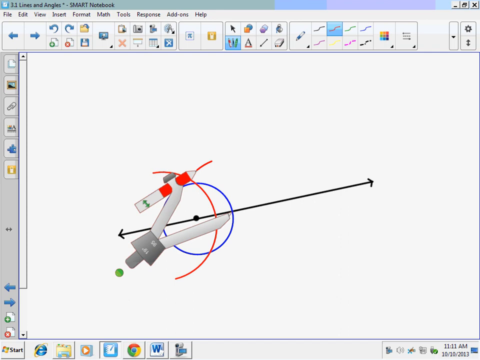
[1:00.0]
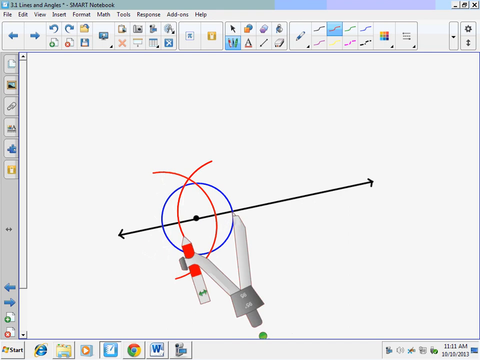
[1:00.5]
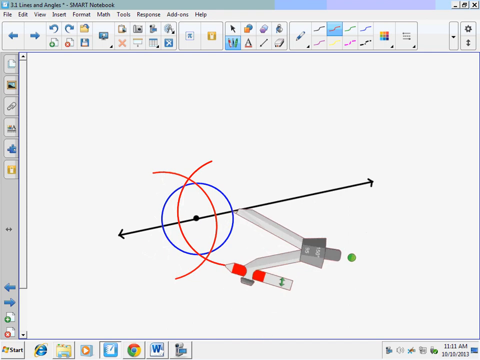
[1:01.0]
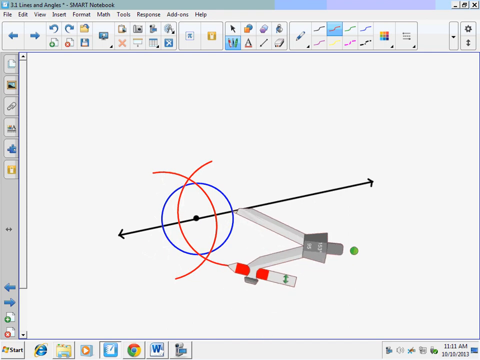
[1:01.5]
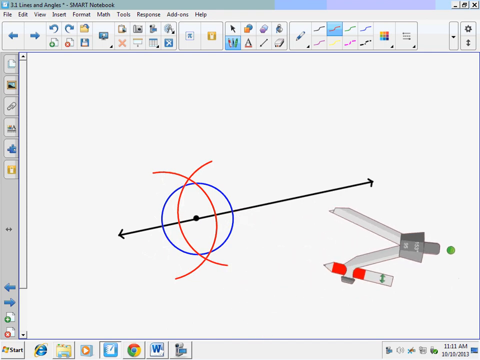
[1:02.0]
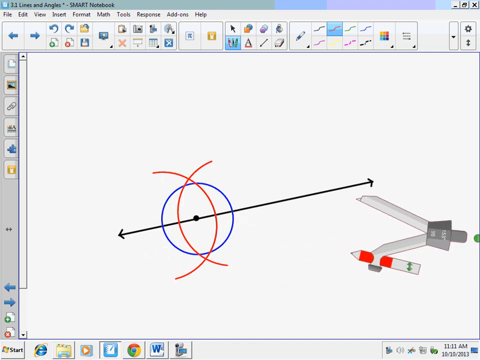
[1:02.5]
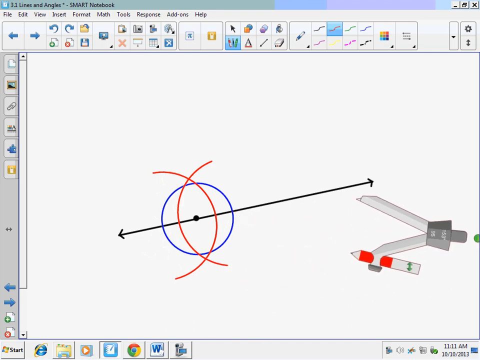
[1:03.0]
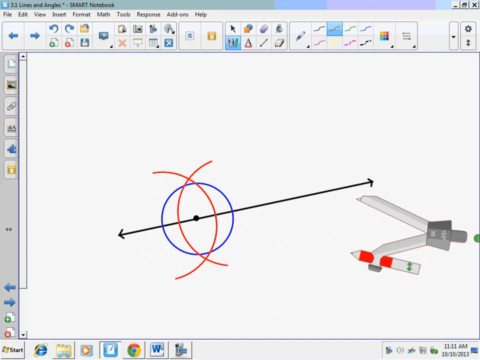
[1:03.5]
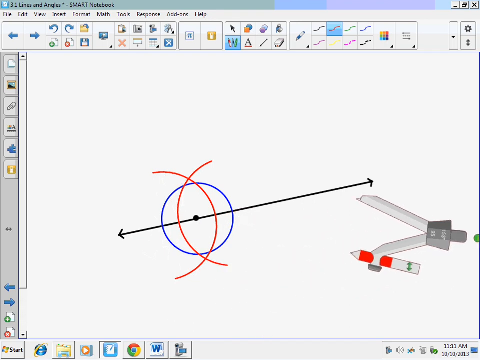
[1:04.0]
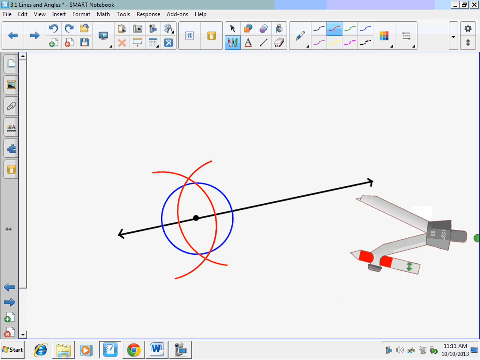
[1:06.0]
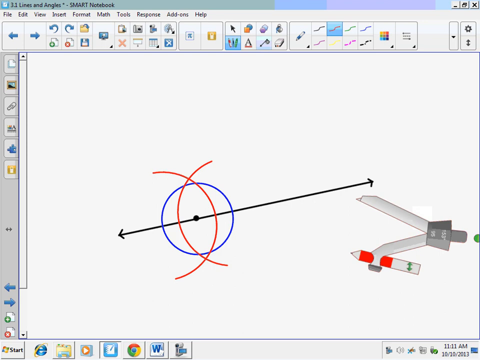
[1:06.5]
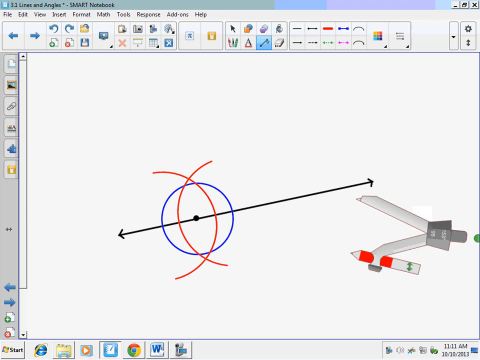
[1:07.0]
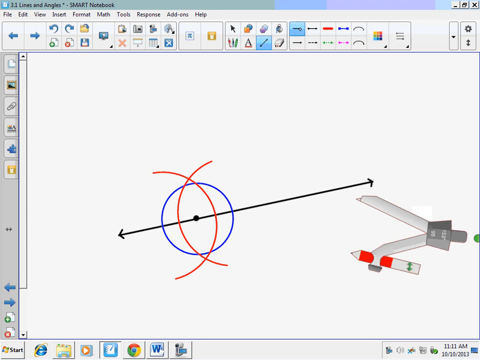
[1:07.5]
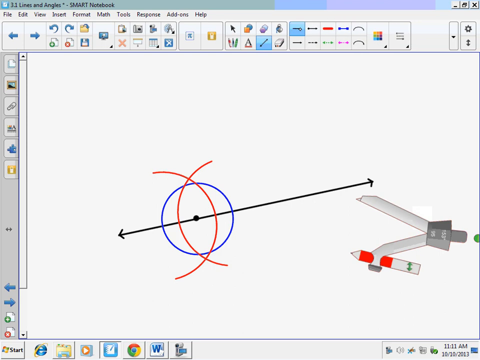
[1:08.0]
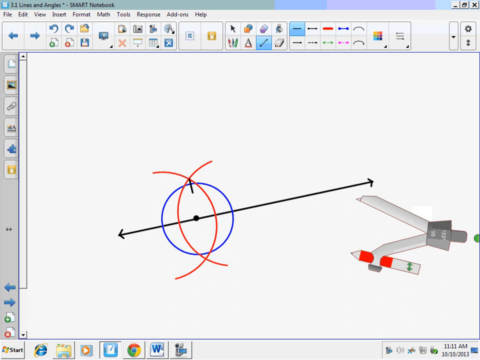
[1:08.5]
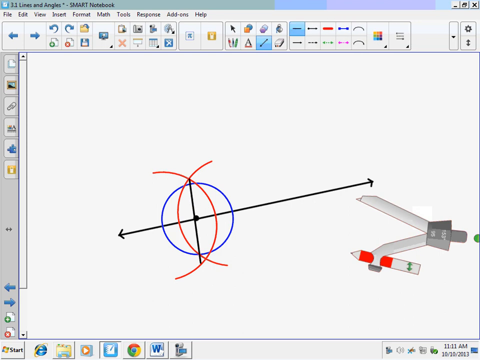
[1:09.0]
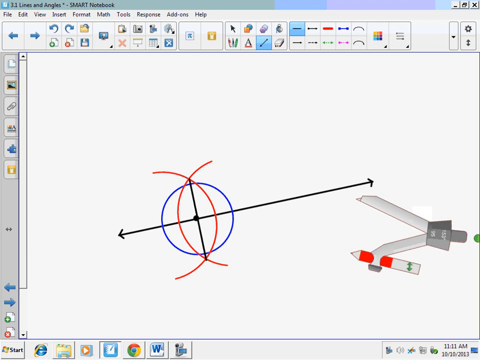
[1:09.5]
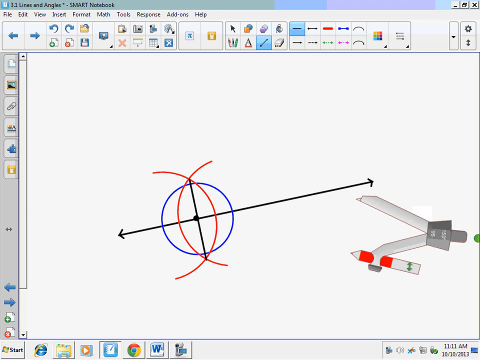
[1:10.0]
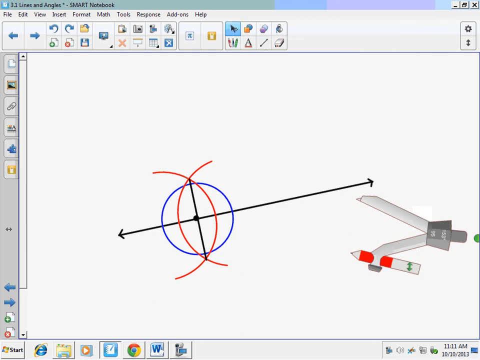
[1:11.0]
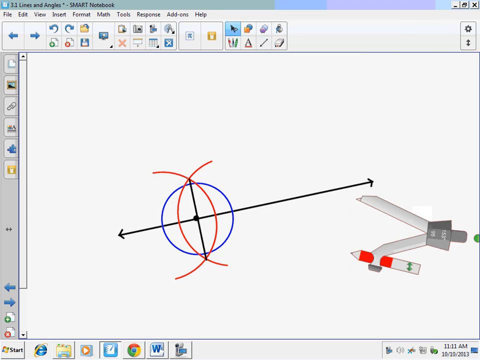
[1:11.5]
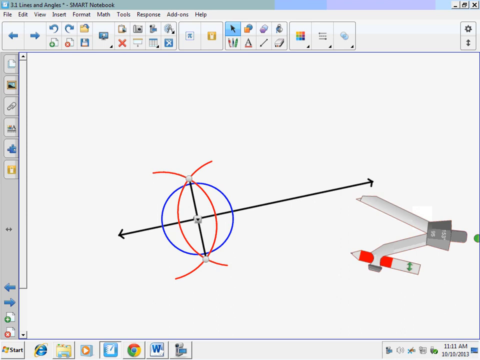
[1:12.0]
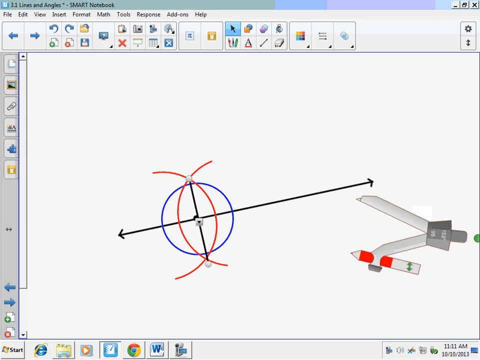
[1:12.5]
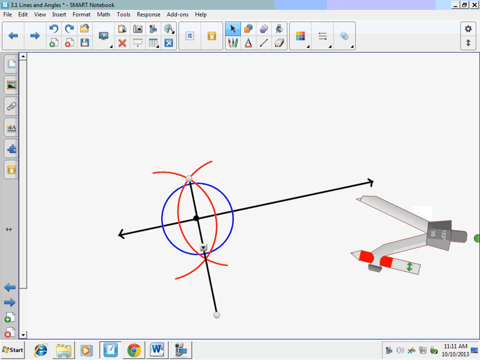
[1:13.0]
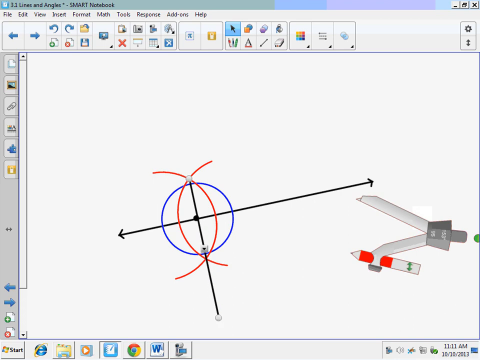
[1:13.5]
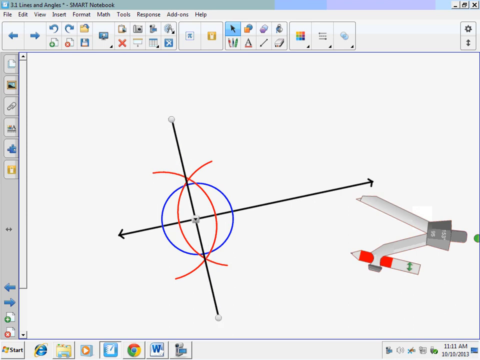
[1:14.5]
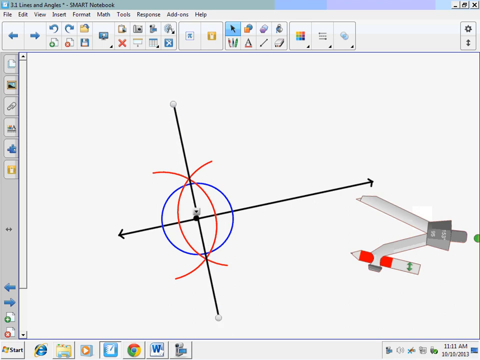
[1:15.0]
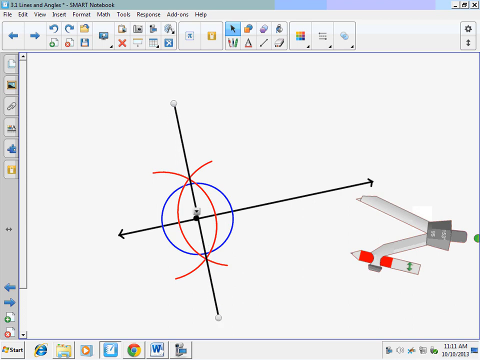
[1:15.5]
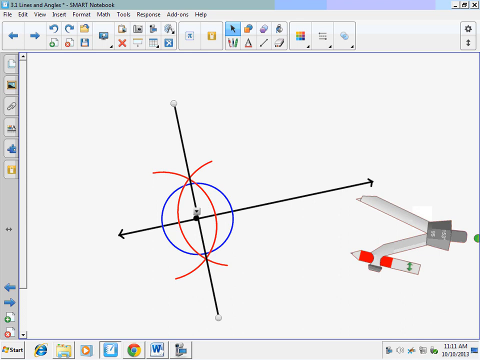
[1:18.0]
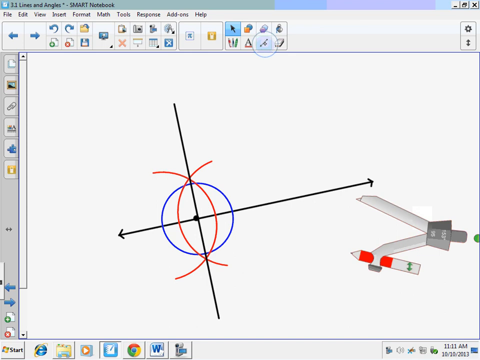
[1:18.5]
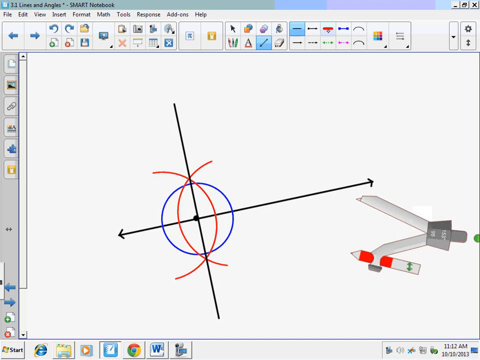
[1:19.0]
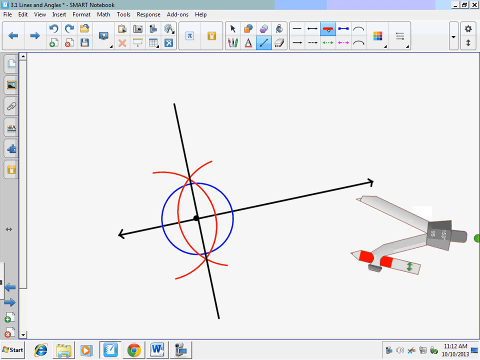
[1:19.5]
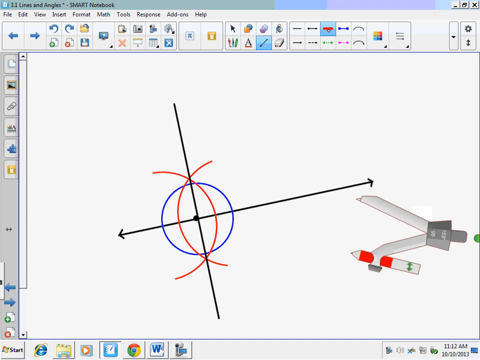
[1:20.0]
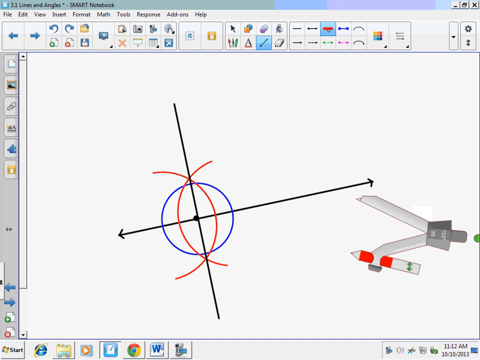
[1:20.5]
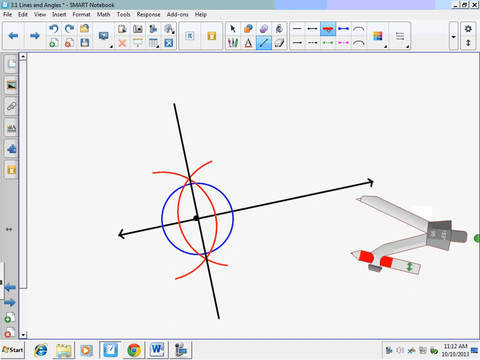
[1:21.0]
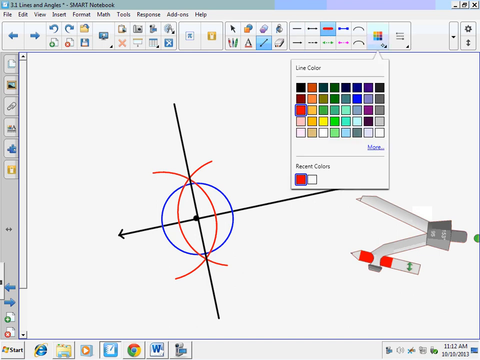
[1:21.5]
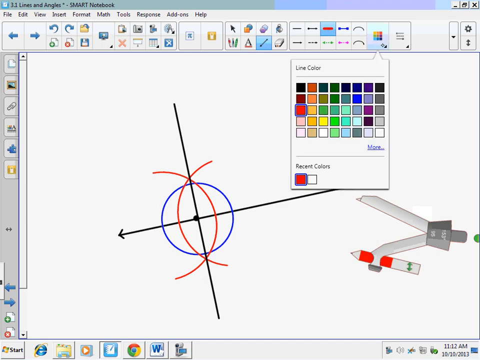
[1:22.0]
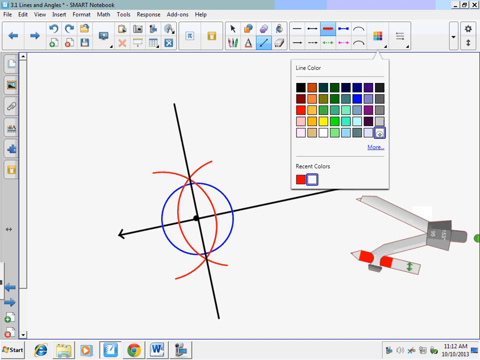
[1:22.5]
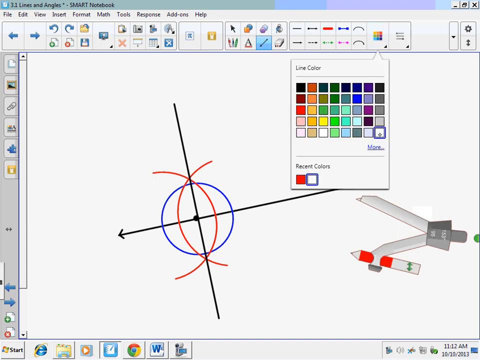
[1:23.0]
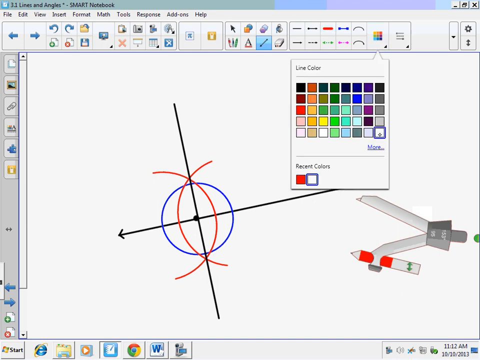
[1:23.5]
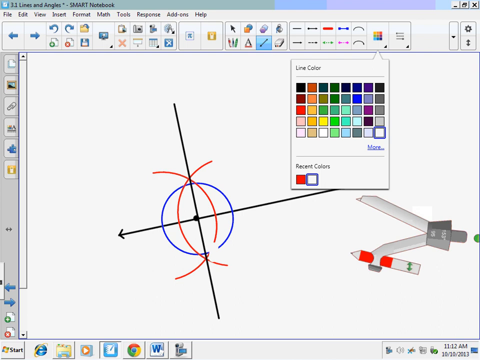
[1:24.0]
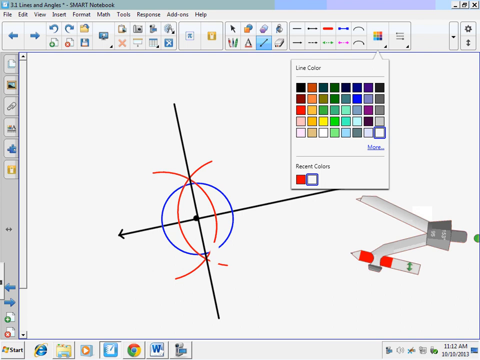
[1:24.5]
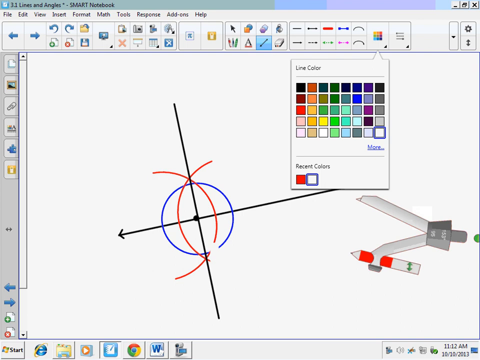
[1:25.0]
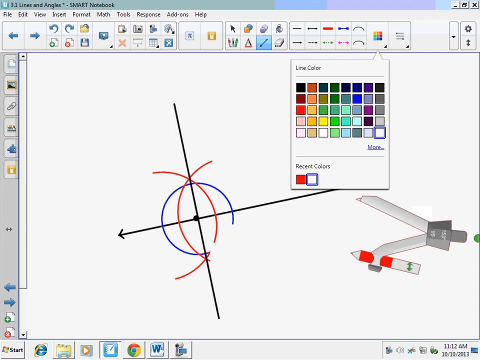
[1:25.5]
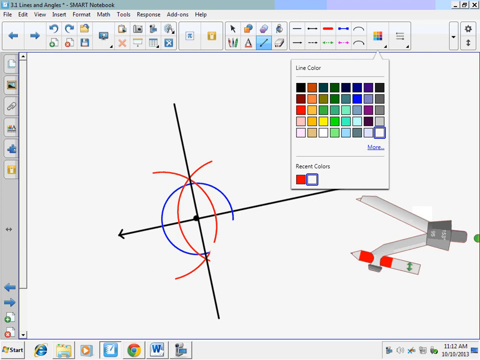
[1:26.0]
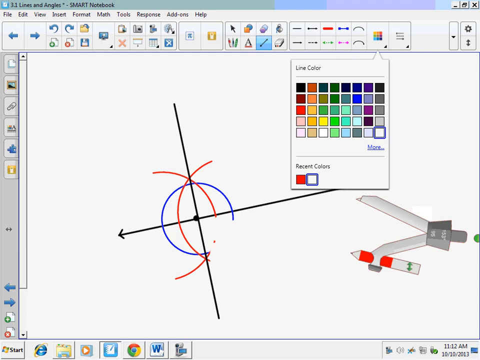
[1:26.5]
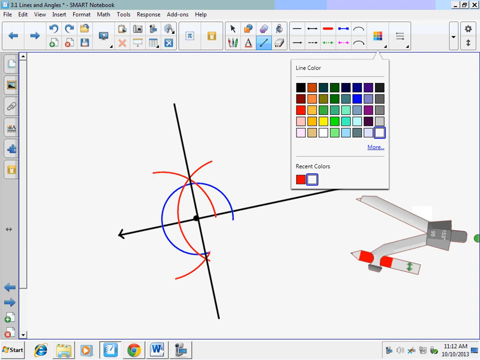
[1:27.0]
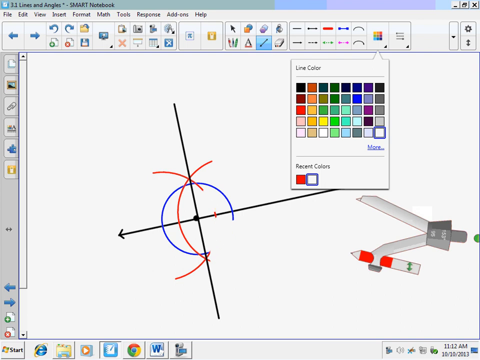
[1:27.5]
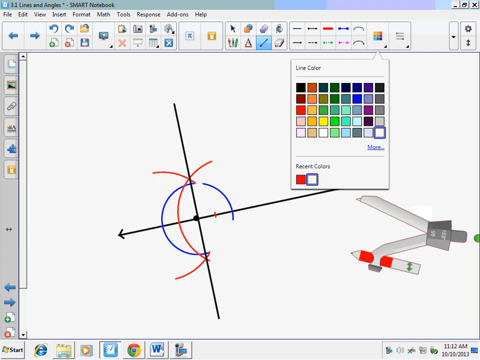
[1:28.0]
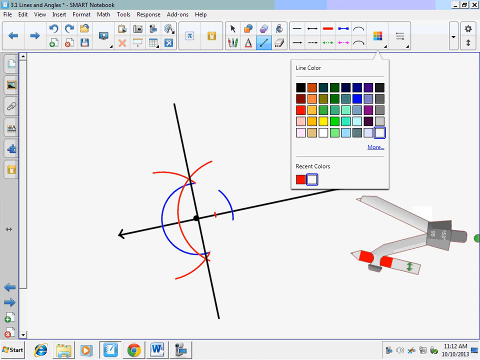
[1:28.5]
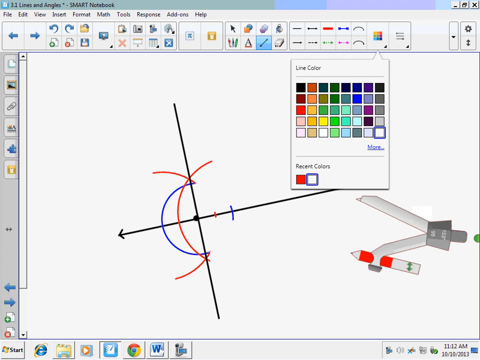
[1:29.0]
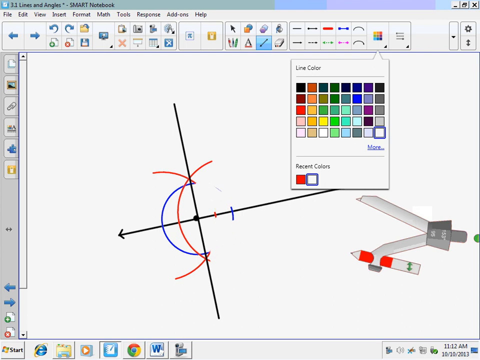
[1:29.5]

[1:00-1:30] A computer display is recorded showing a program titled "3.3 Lines at Angle Smart Notebook." On the solid white workspace, a line runs from one side to the other, going higher toward the right. A point is drawn on the line with a blue circle already drawn around it, and a red semicircle has been drawn between the point and the edge of the blue circle on the line. The user is in the process of drawing another semicircle and completes it, so there are two red semicircles facing opposite directions around the point, with the blue circle surrounding the point. They move the compass tool away from the red line they were drawing, move the mouse cursor up to the tools at the very top of the program, and select a line tool. They draw a line from where the two semicircles meet on one side to where they meet on the other side, then continue drawing the line, making it longer.